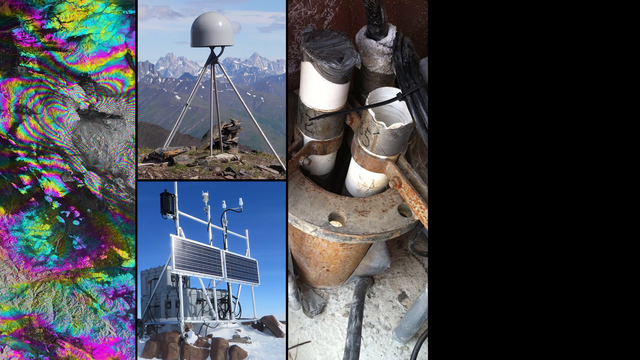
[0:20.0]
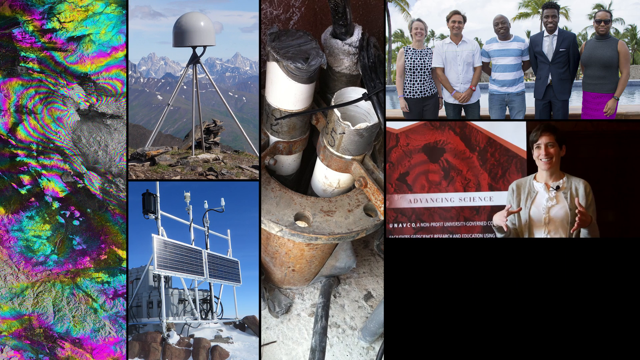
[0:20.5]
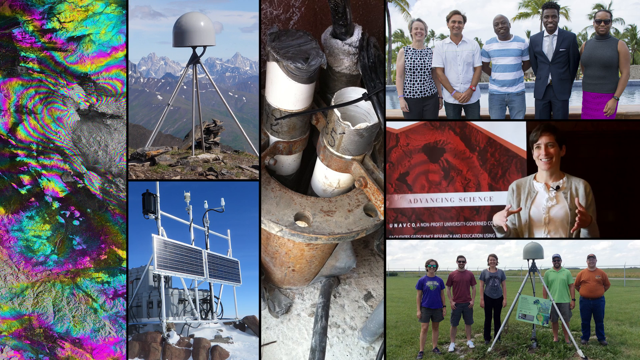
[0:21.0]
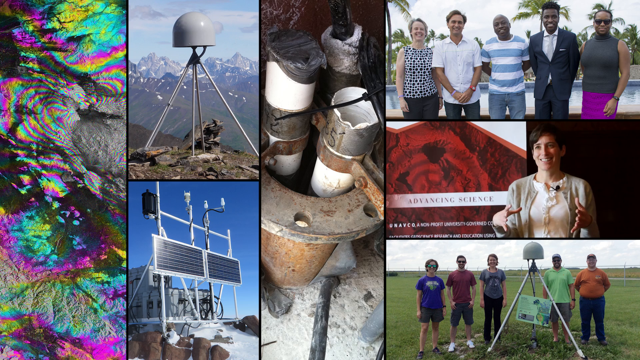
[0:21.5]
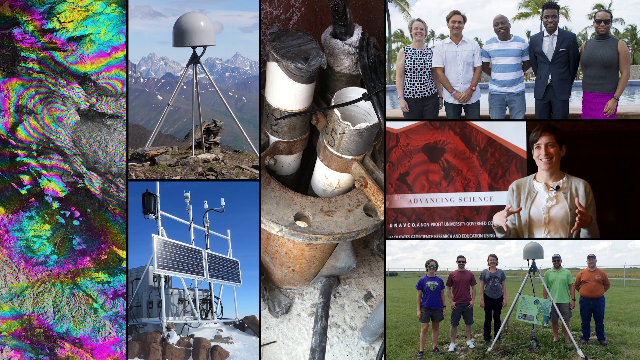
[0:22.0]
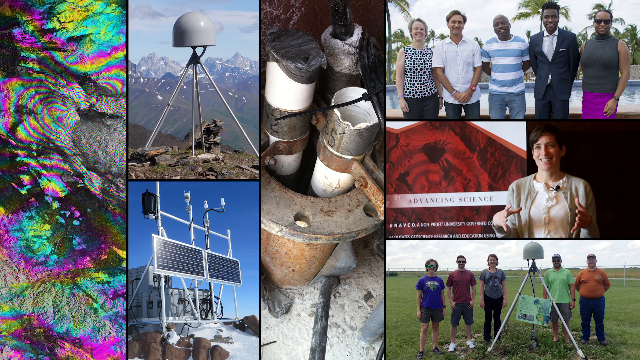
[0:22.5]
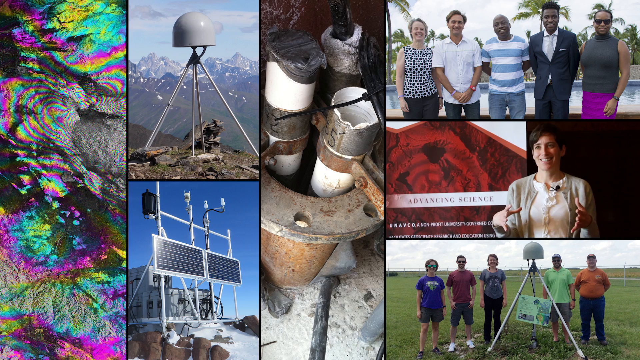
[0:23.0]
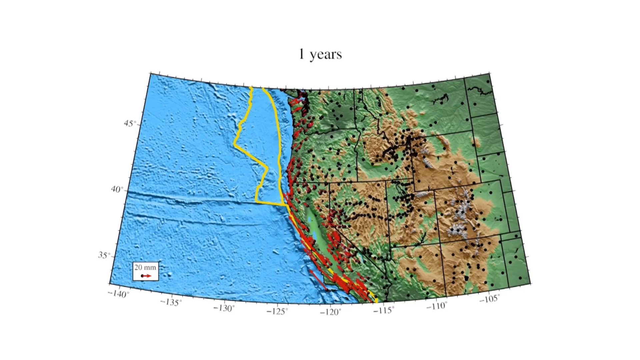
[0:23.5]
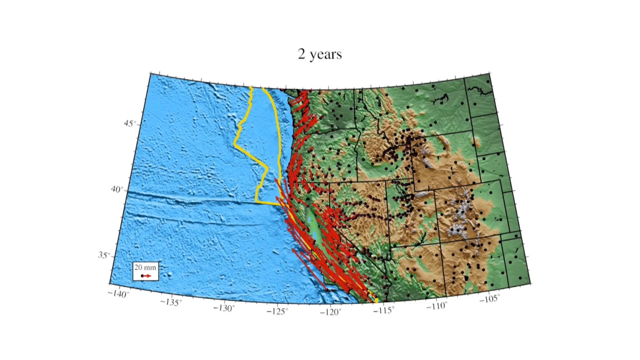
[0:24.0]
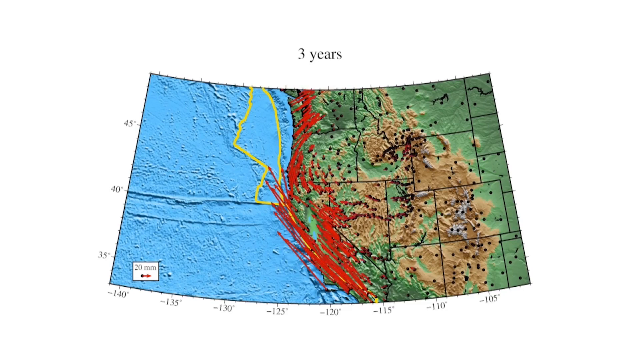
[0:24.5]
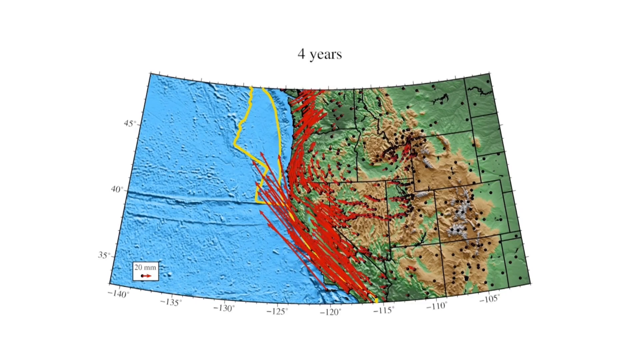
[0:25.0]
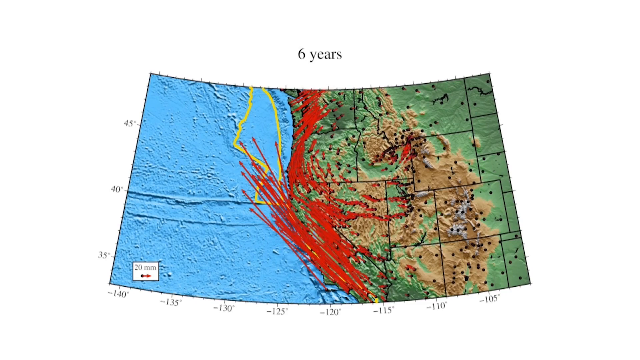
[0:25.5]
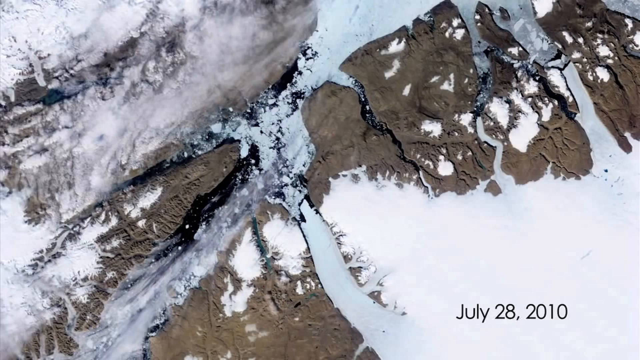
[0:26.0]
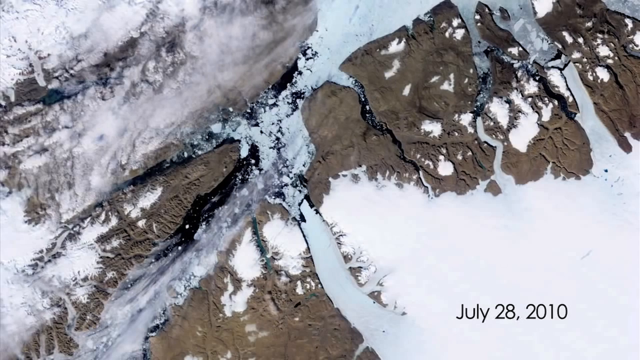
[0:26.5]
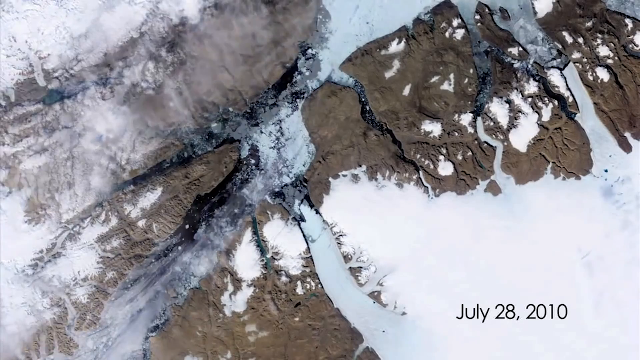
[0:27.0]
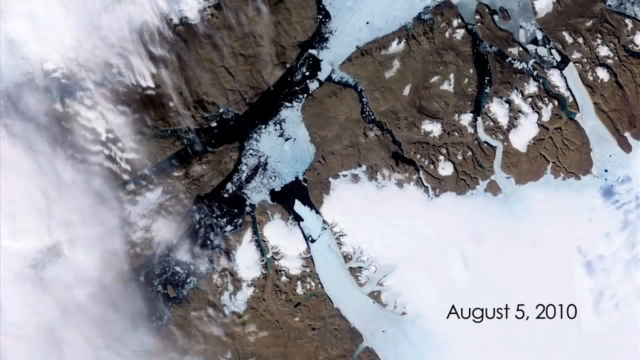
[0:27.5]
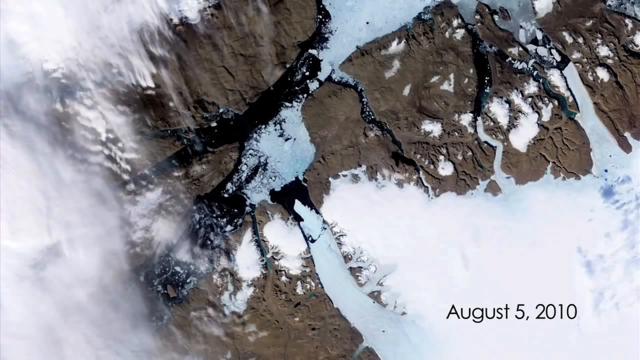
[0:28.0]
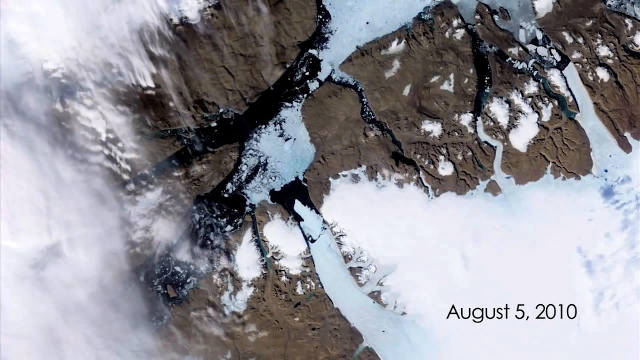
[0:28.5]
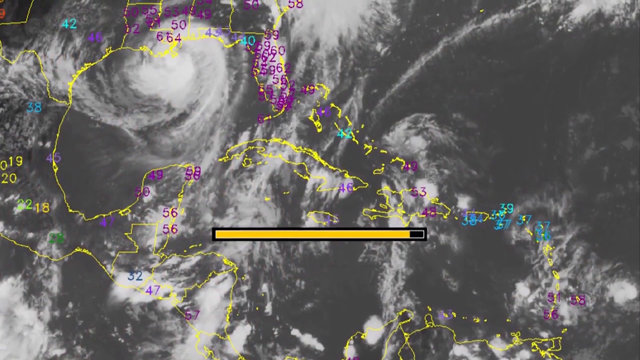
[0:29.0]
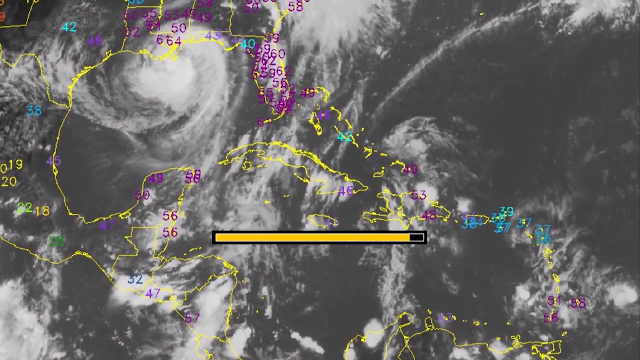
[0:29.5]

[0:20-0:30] A topographical map of the western part of the United States appears, with red lines jutting out from the coastline into the Pacific. The view changes to either a satellite image or something very high in the sky looking down through the clouds at mountainous regions, with a black watermark date reading July 28, 2010.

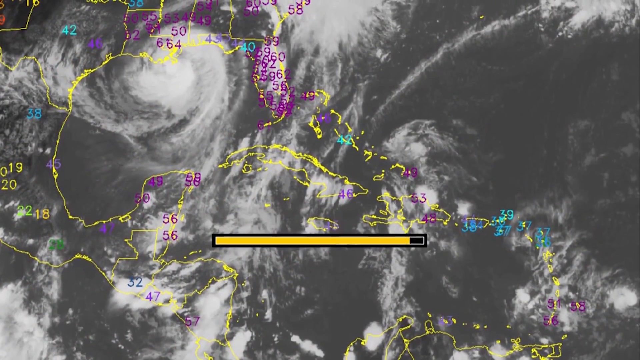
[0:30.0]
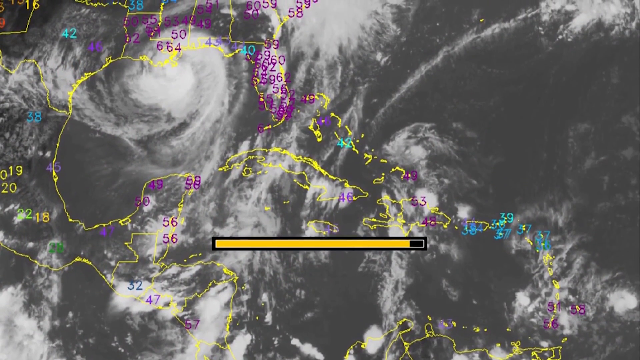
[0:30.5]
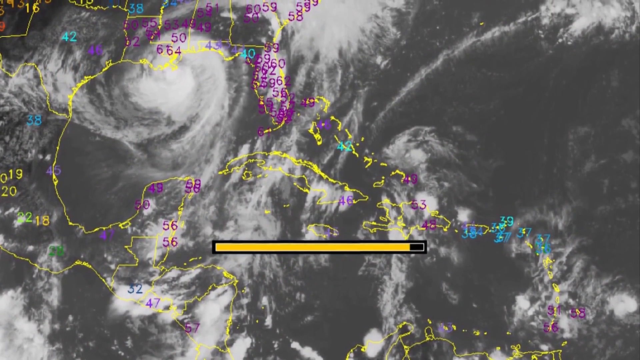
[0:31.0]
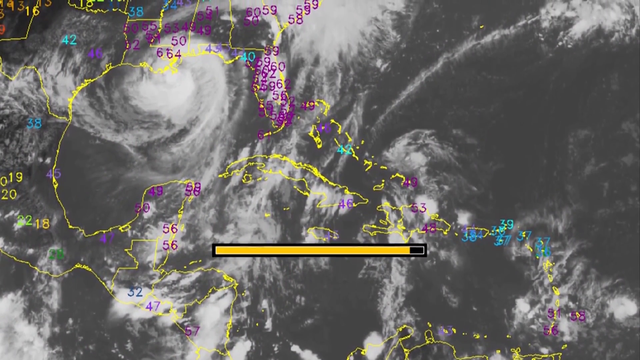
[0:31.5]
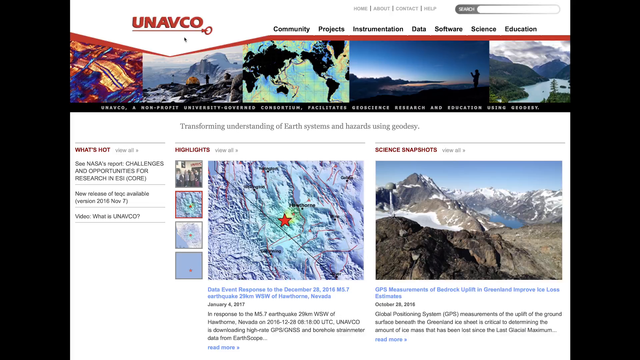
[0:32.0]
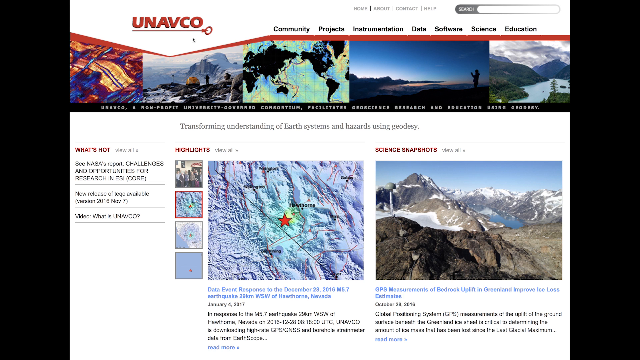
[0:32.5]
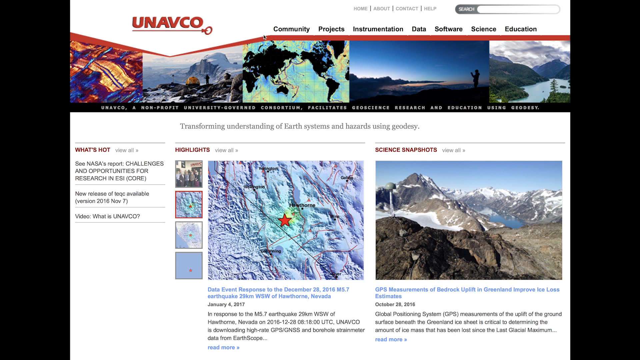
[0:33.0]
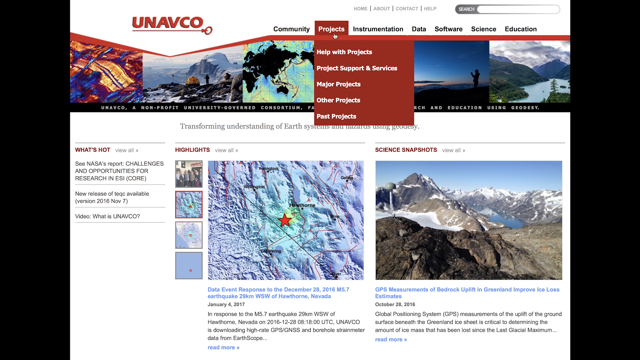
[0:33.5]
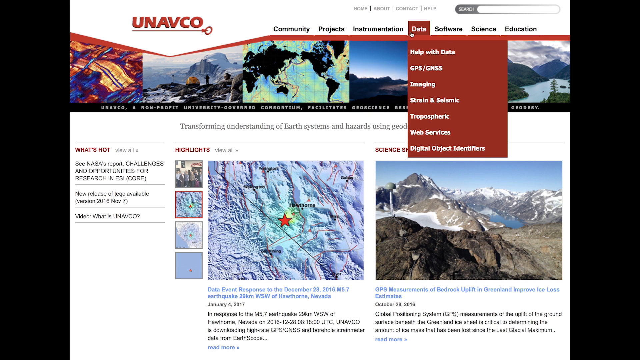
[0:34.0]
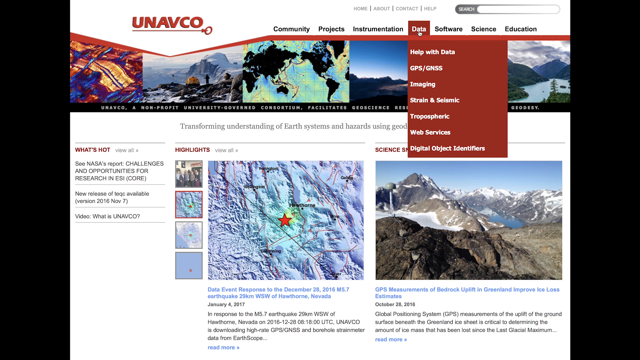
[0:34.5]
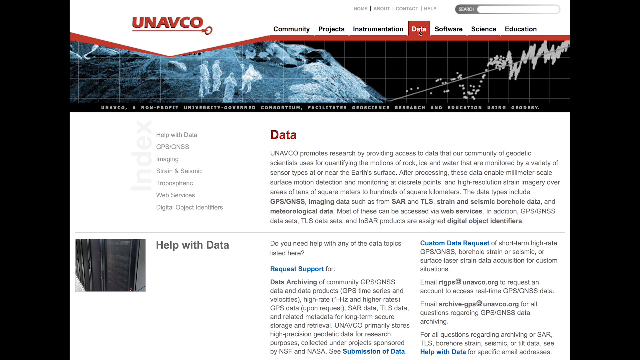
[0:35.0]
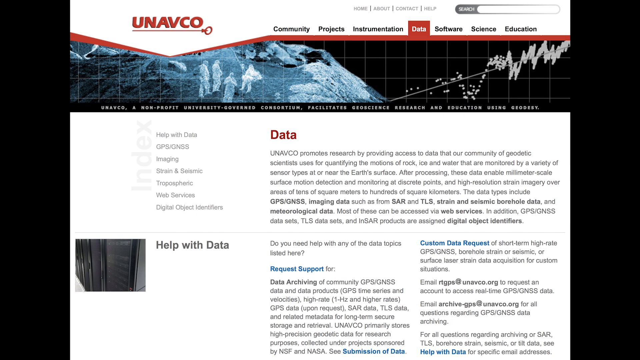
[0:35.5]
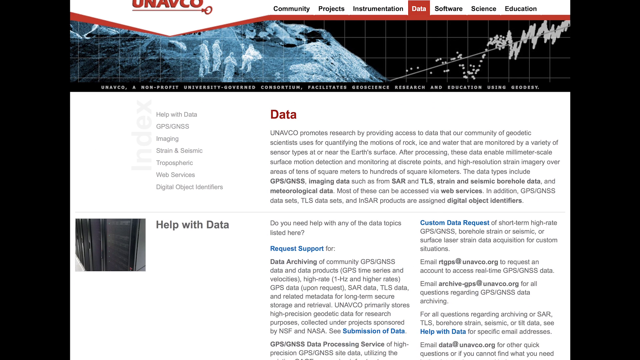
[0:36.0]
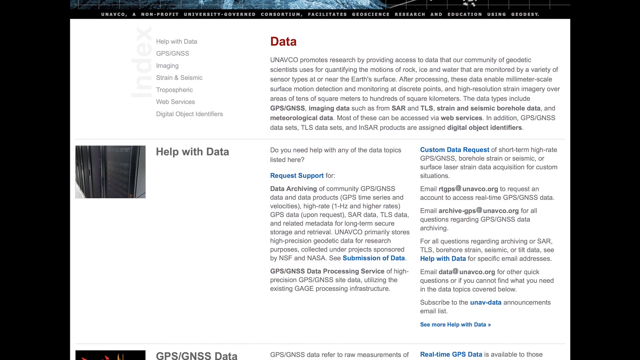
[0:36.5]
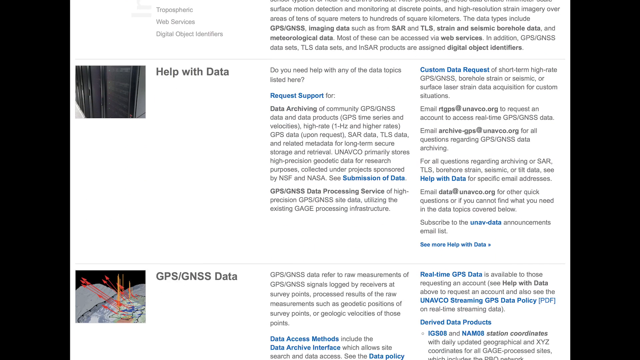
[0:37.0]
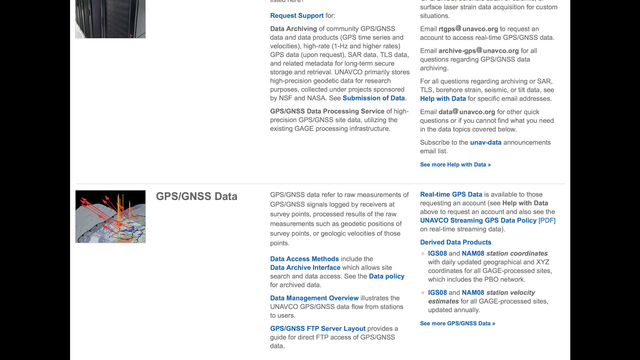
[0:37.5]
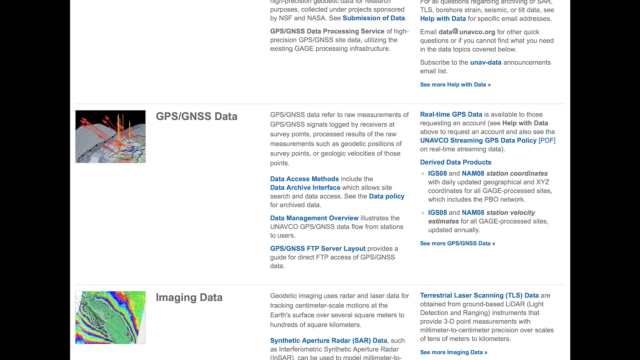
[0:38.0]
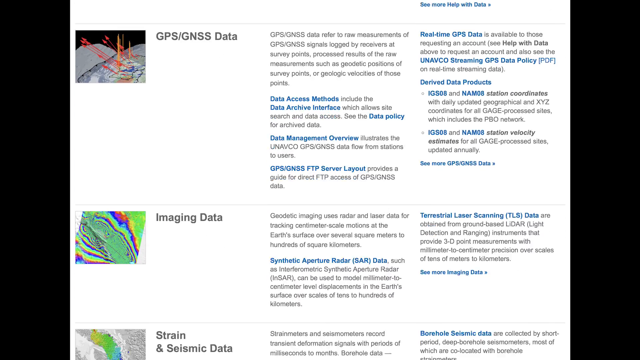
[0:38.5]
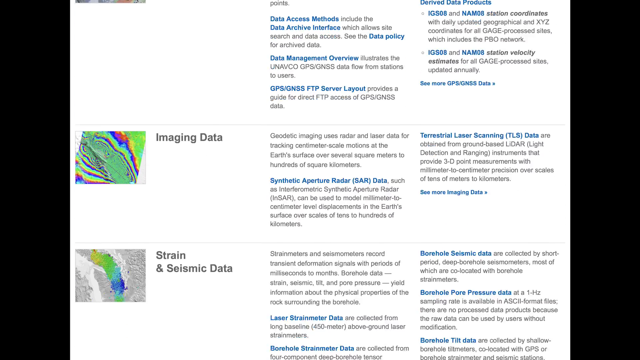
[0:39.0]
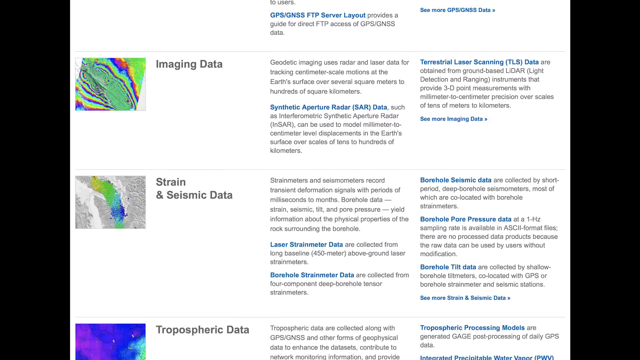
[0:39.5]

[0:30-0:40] A view looks down at the eastern and southern coast of the United States, specifically Florida, Georgia, Alabama, Louisiana and Texas, where a large hurricane is about to hit the coast of Louisiana and Mississippi. Then the Univoco website appears, with tabs for community, projects, instrumentation, data, software, science and education, and sections for new topics, science snapshots and highlights.